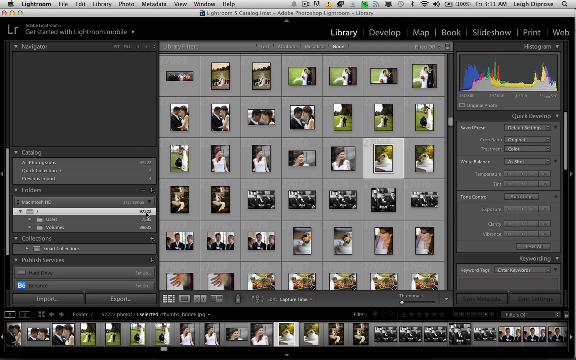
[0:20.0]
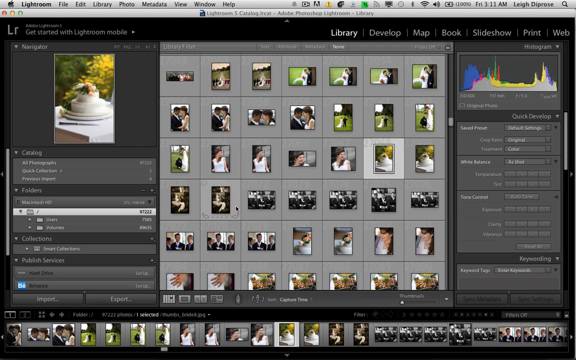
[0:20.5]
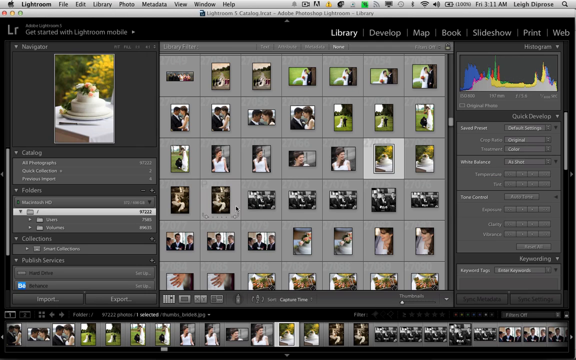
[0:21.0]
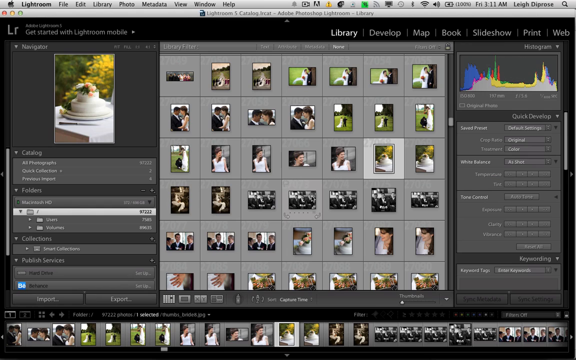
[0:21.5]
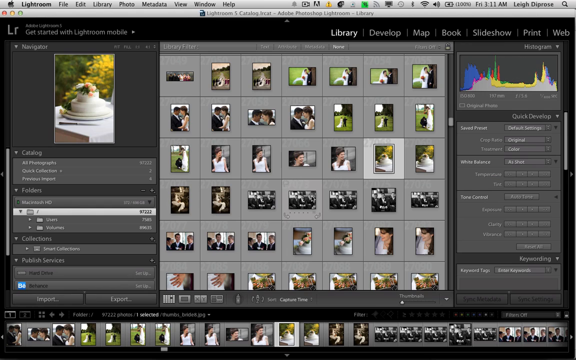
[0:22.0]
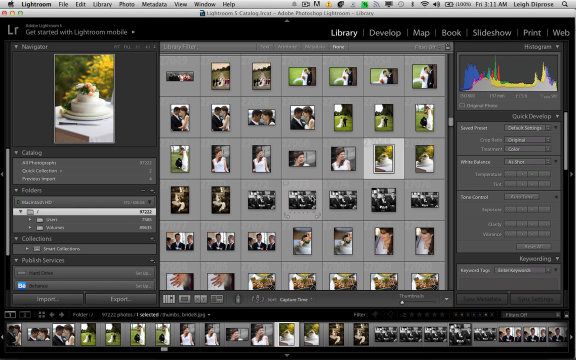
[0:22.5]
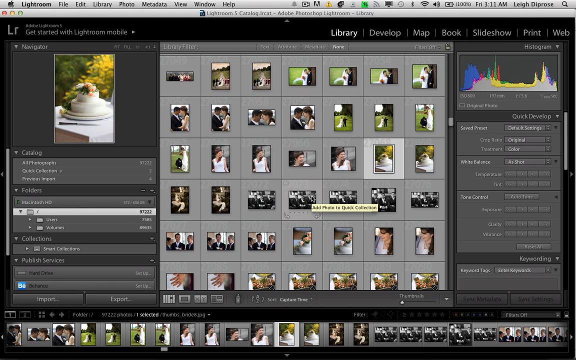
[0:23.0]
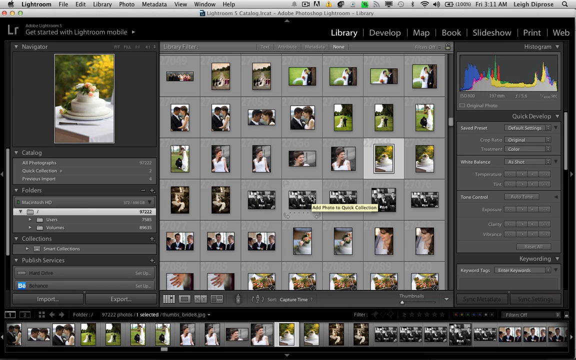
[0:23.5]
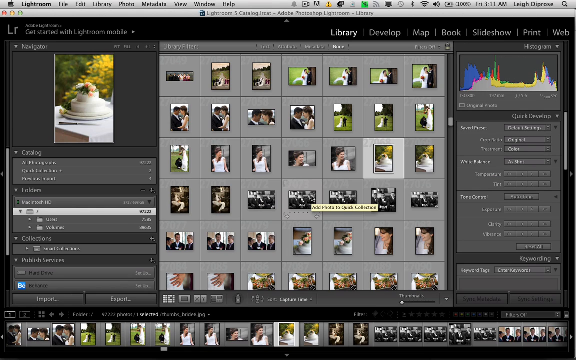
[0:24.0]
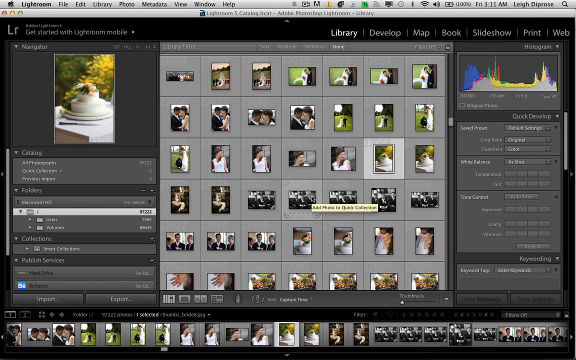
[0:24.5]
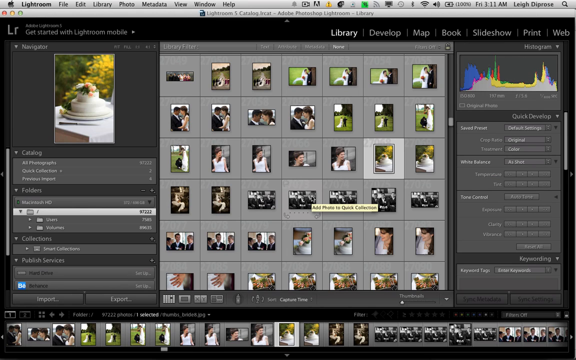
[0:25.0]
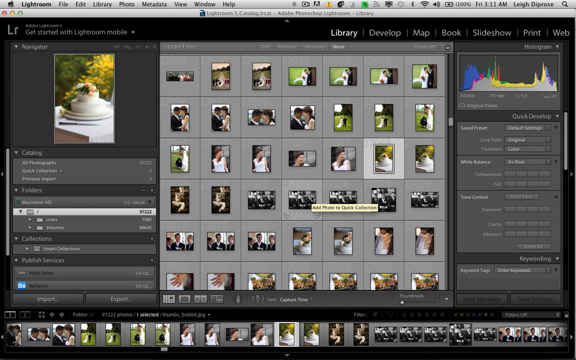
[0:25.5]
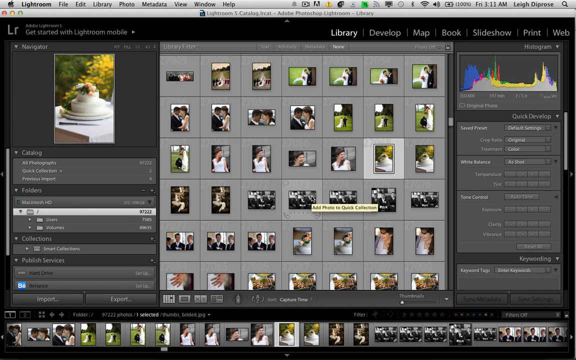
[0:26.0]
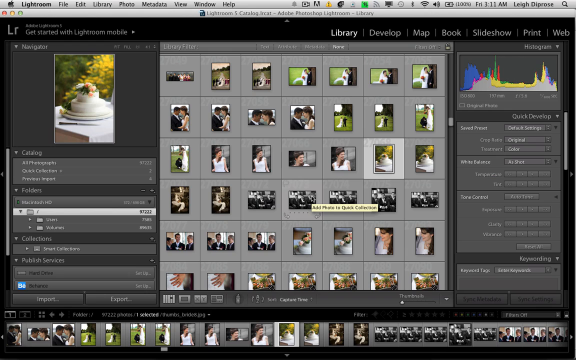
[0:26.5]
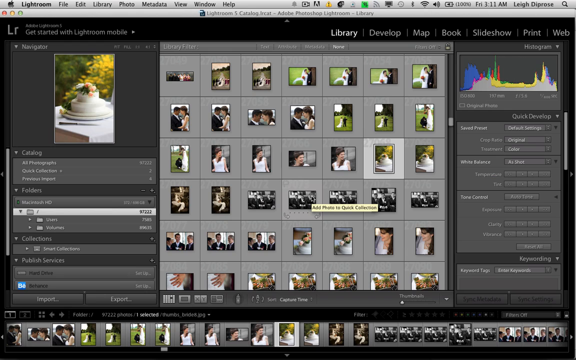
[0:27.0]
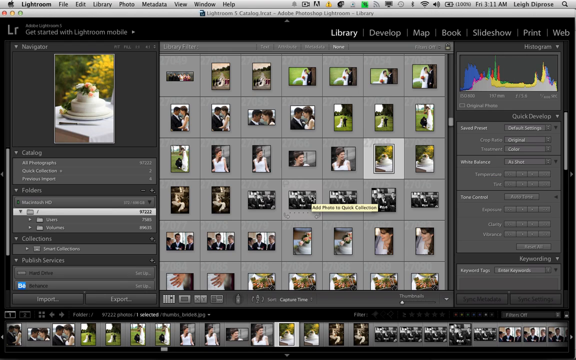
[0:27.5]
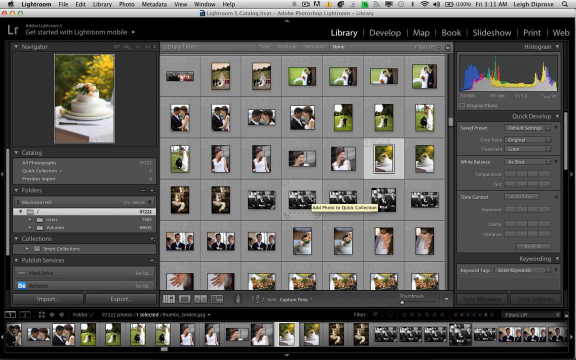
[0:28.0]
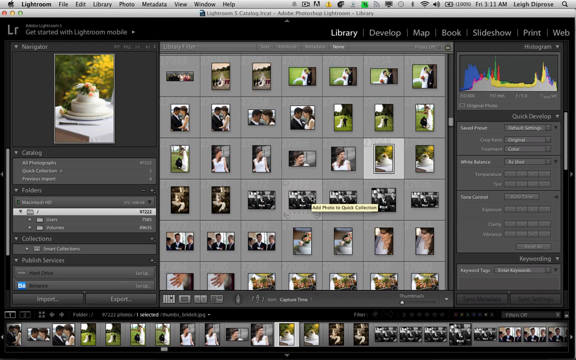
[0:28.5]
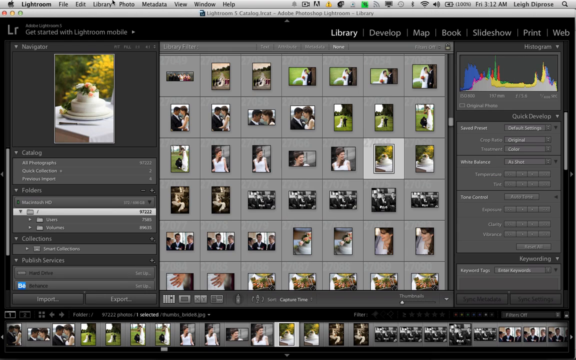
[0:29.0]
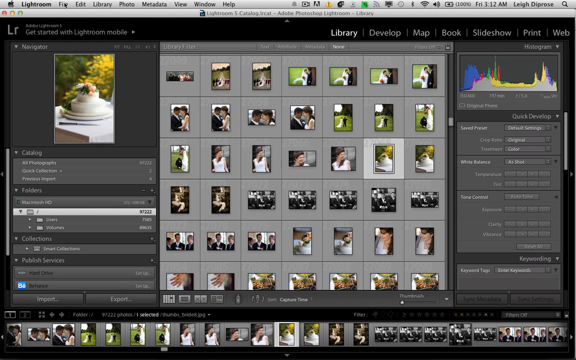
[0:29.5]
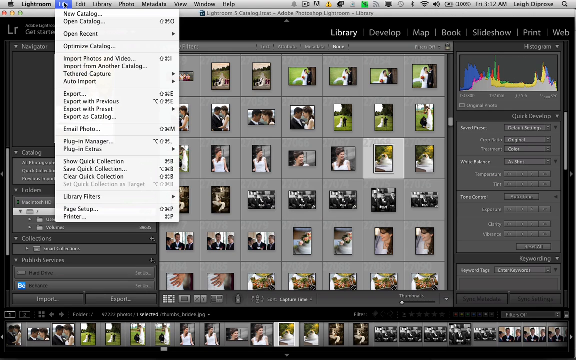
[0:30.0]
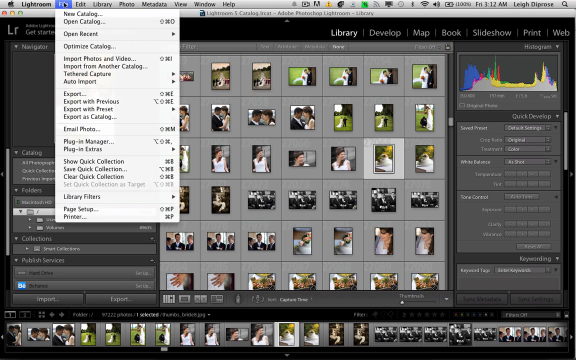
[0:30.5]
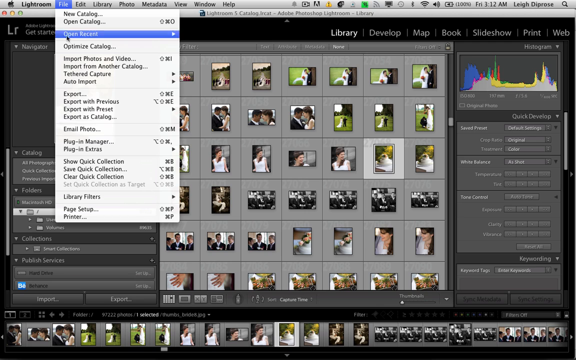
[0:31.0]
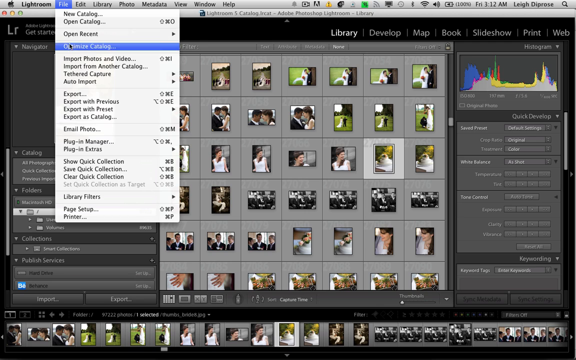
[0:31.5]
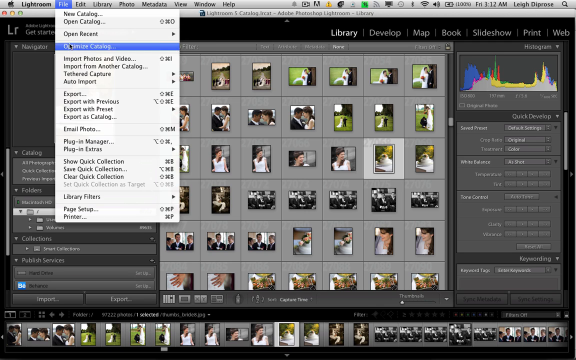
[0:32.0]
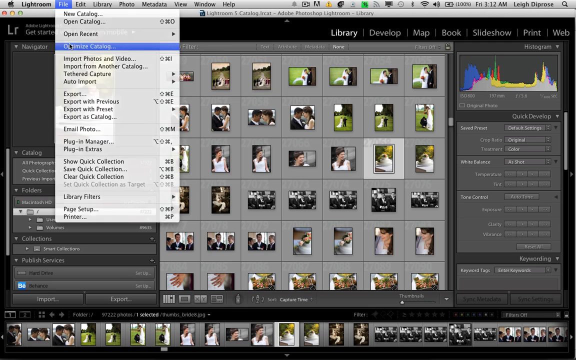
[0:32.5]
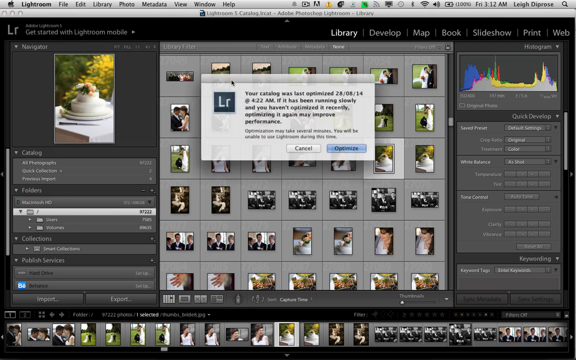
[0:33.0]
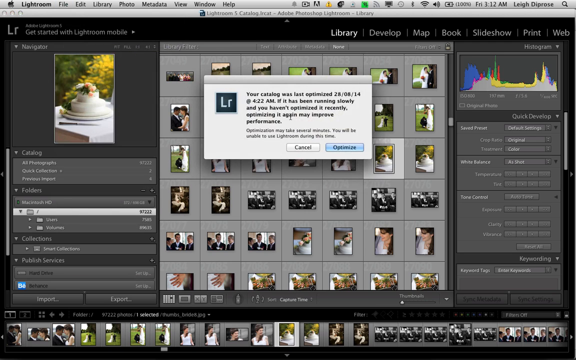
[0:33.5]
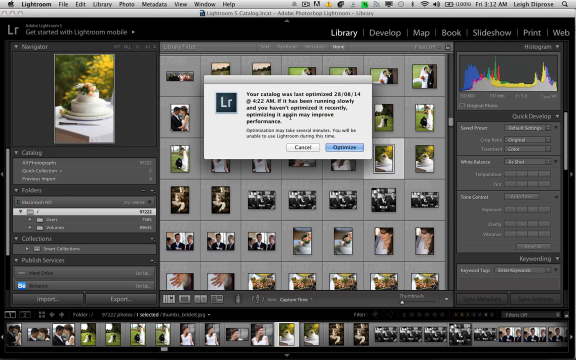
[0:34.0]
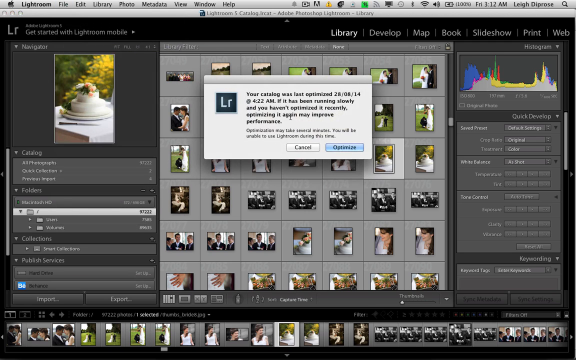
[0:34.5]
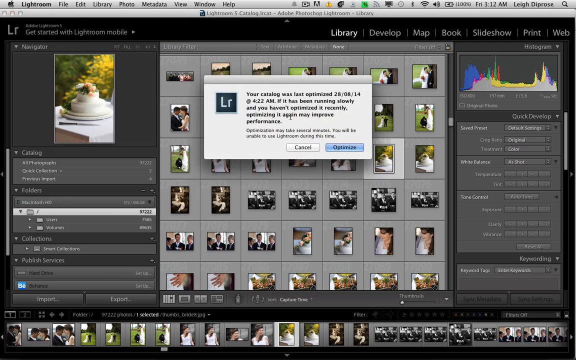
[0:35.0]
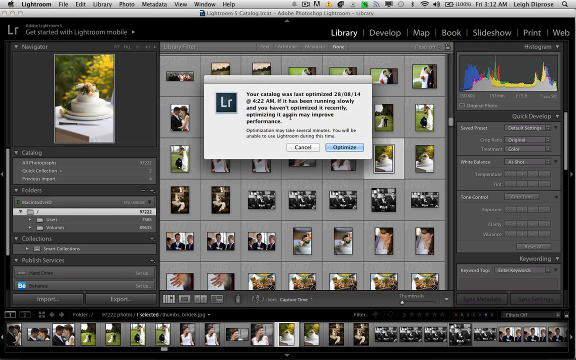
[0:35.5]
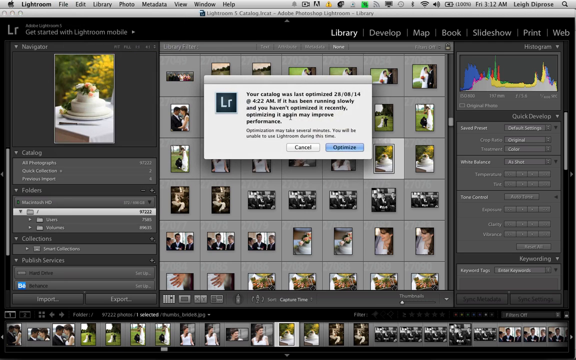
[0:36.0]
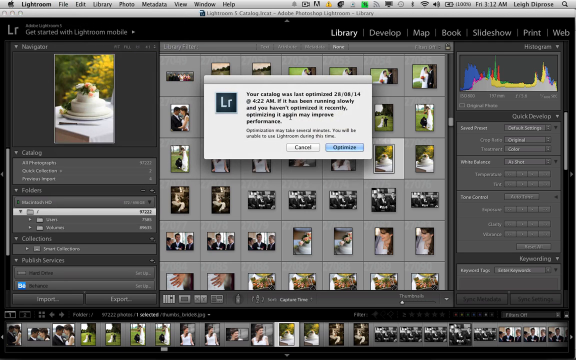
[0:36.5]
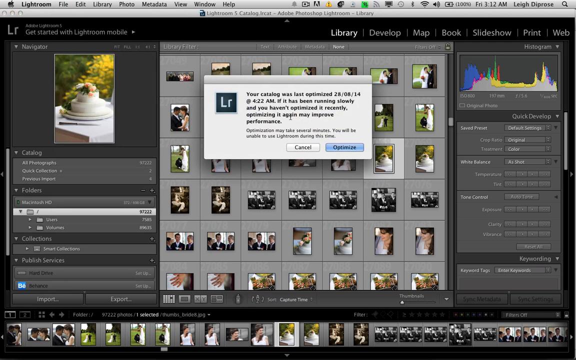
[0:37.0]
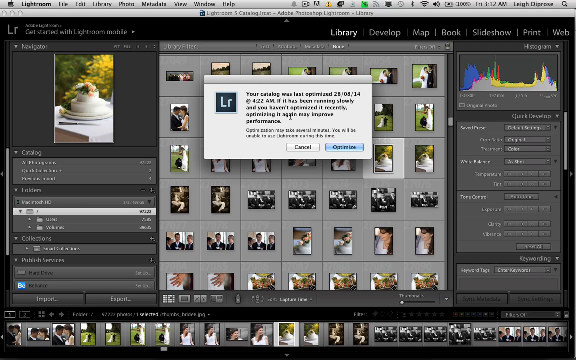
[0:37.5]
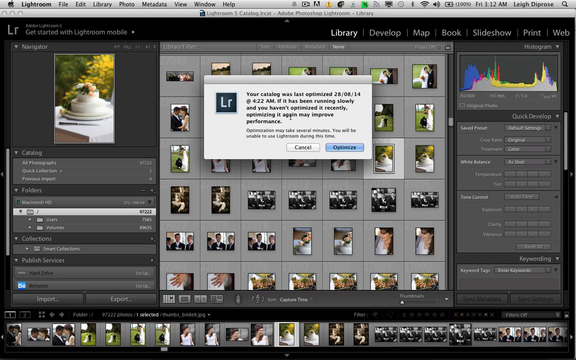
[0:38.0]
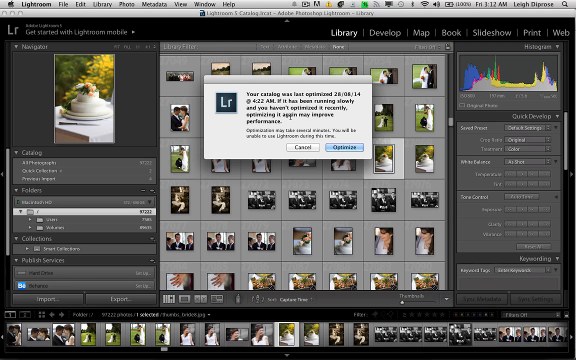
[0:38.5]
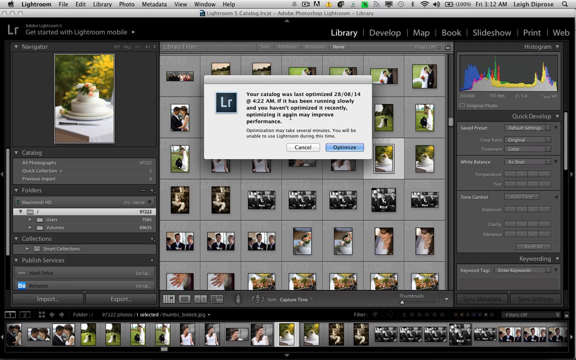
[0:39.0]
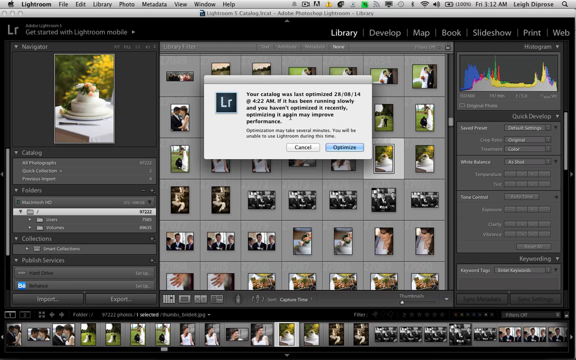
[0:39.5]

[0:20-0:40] Pictures of a woman, a cake and a wedding, seemingly taken in a garden with a green lawn, appear on a laptop. Many pictures are on the desktop, and someone seems to be selecting, grouping or possibly deleting them, changing something on the desktop. The pictures are of good quality. Some guests wear black, the groom and the bride hug and hold each other, and there is a white cake.